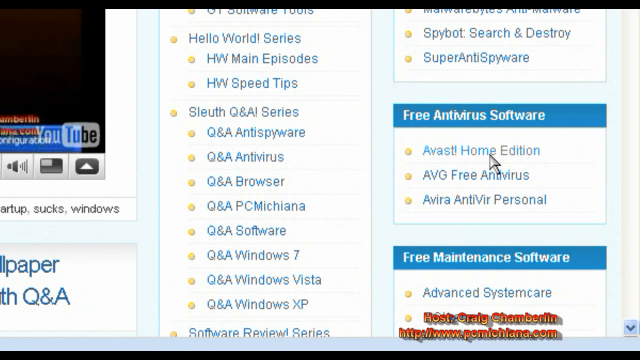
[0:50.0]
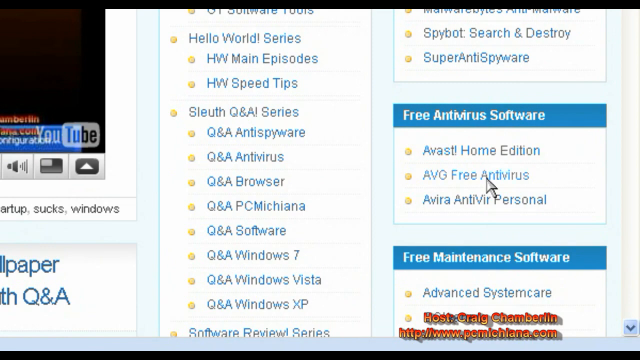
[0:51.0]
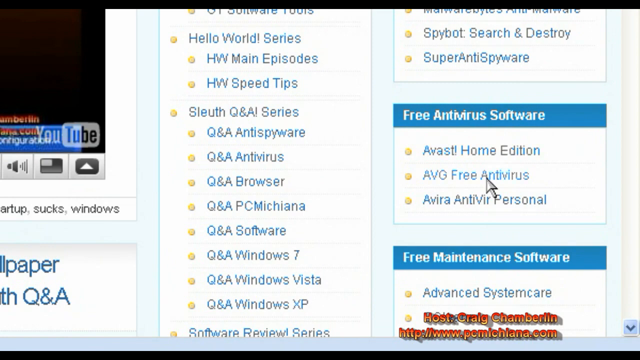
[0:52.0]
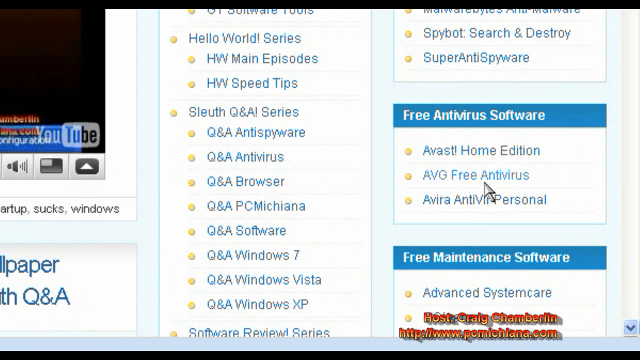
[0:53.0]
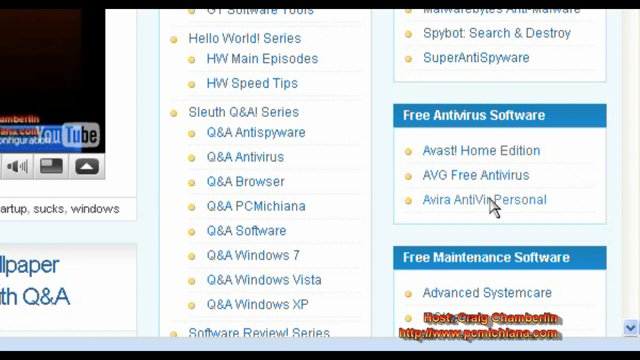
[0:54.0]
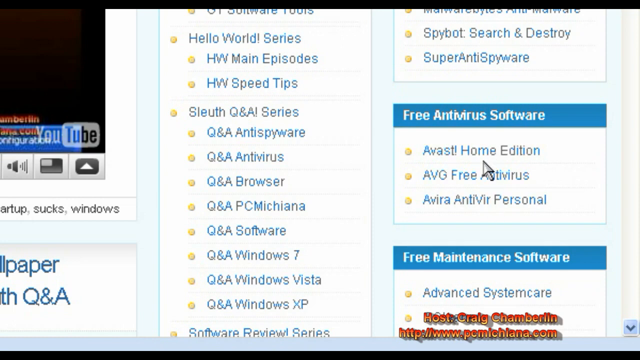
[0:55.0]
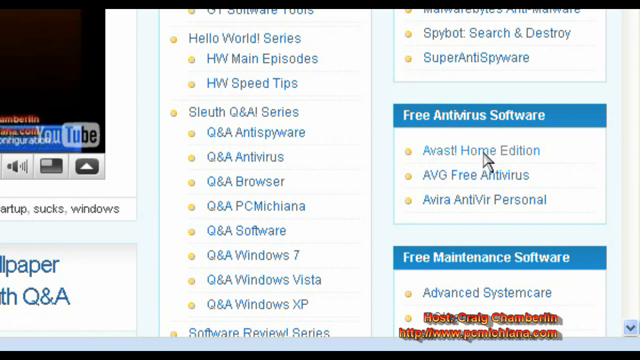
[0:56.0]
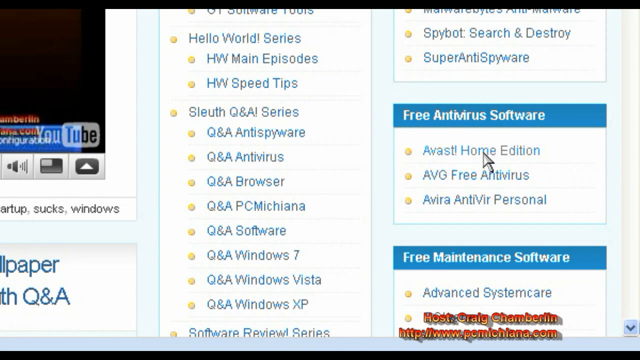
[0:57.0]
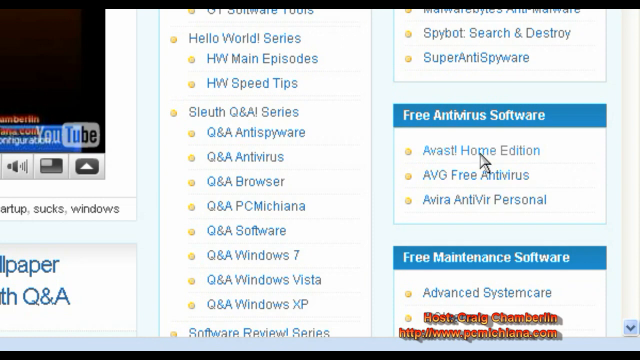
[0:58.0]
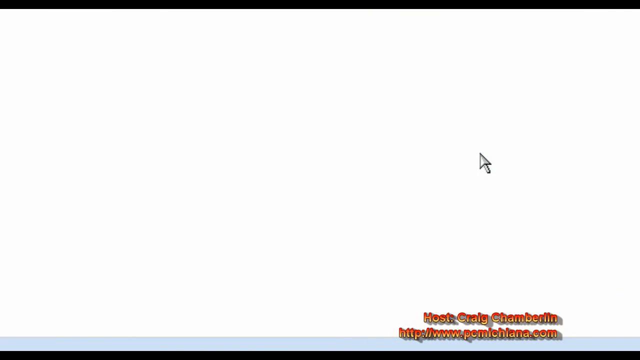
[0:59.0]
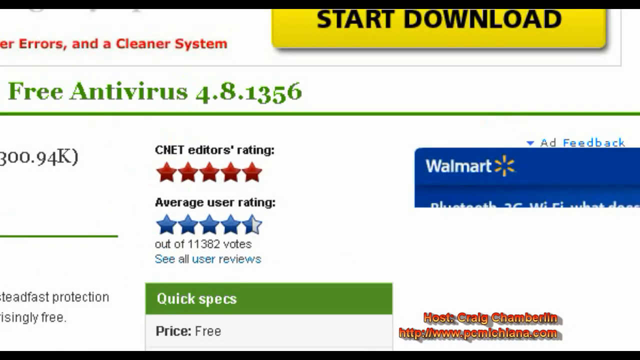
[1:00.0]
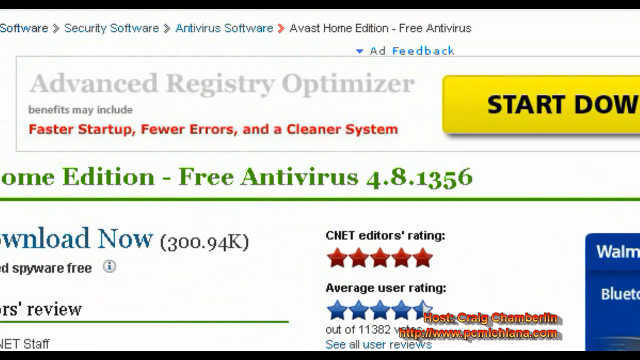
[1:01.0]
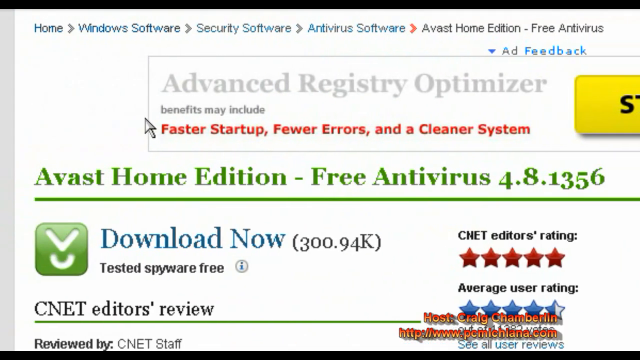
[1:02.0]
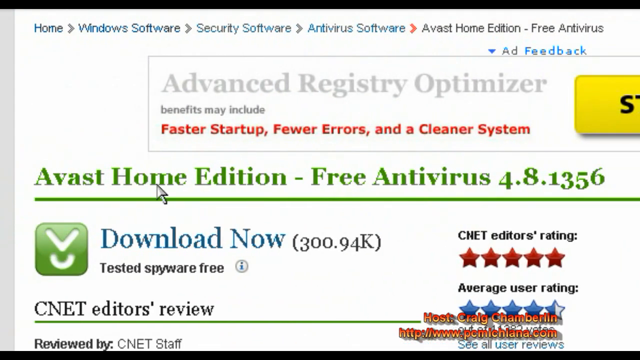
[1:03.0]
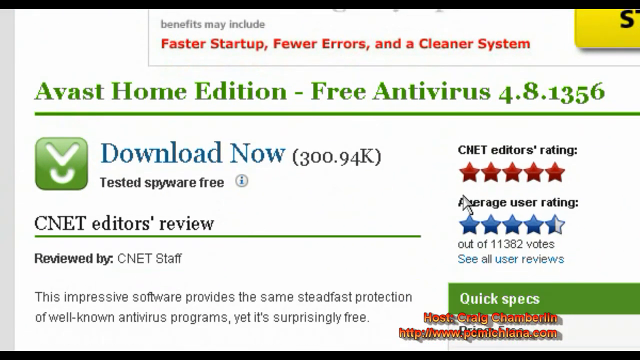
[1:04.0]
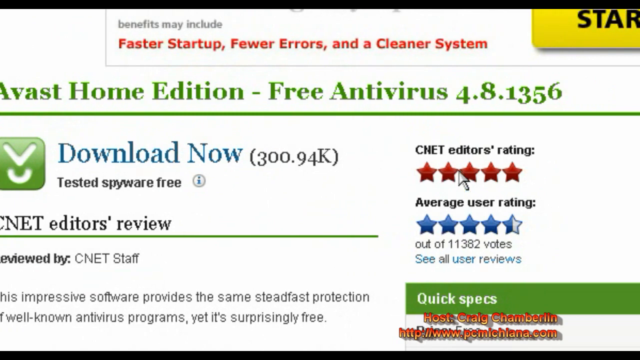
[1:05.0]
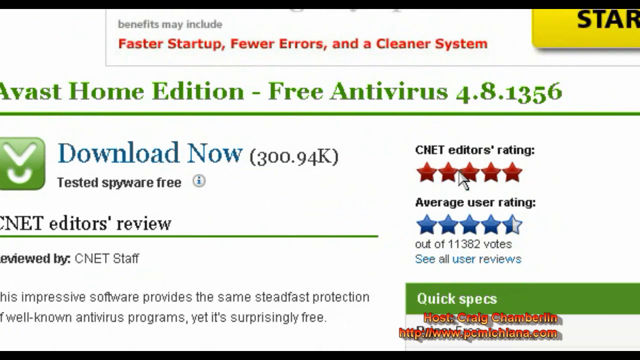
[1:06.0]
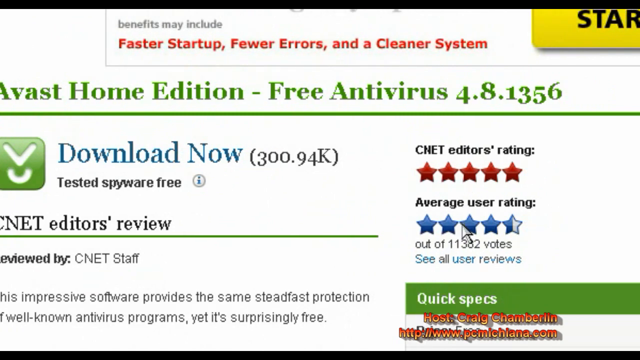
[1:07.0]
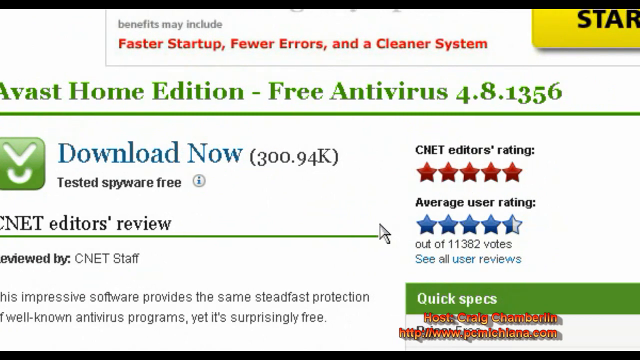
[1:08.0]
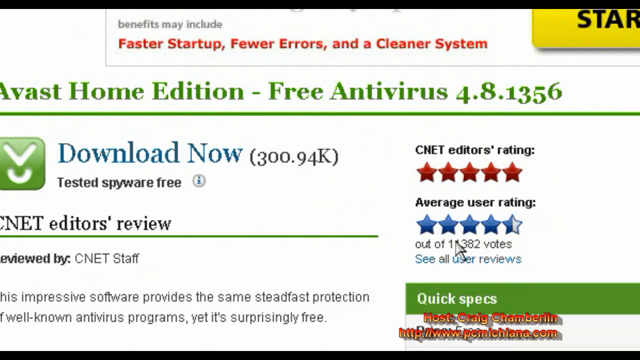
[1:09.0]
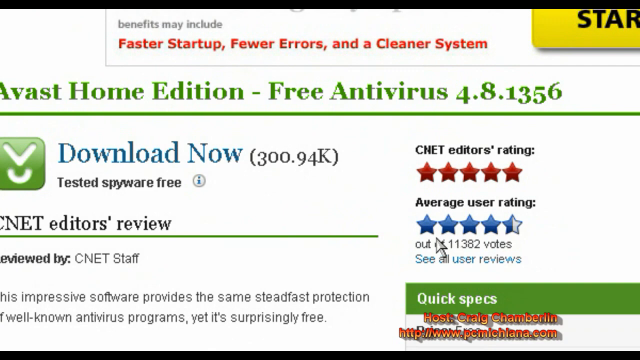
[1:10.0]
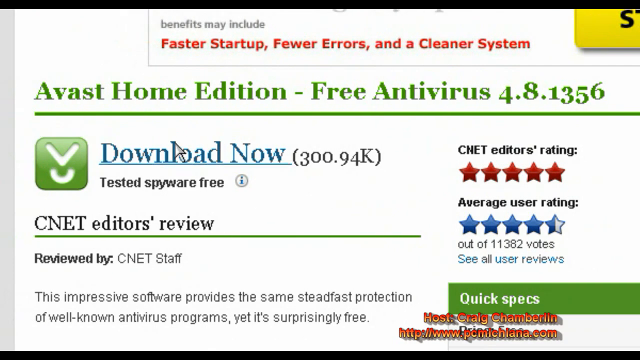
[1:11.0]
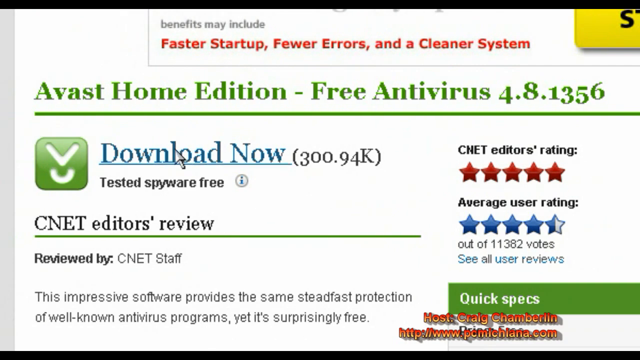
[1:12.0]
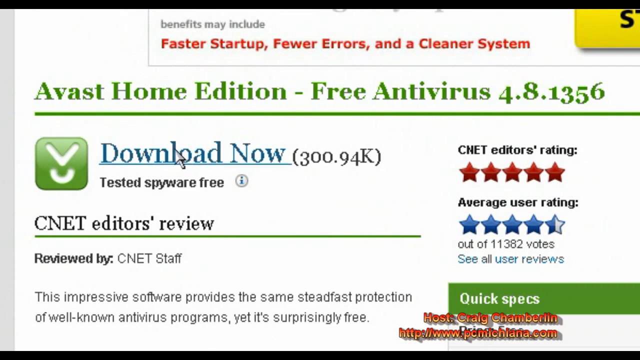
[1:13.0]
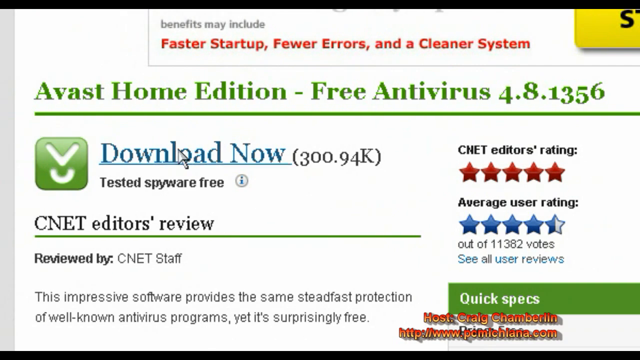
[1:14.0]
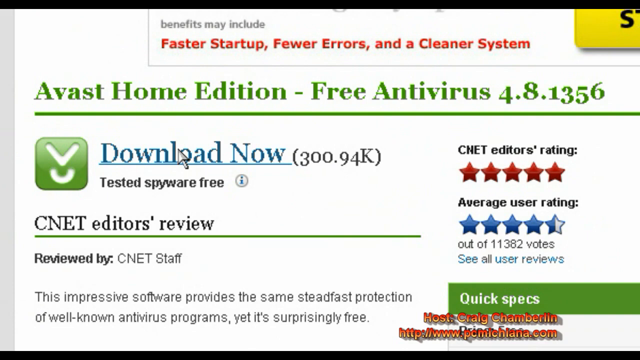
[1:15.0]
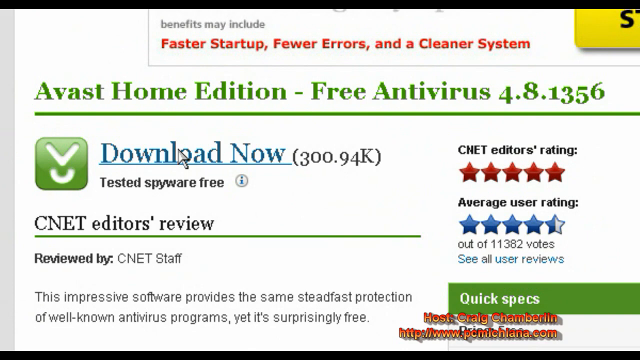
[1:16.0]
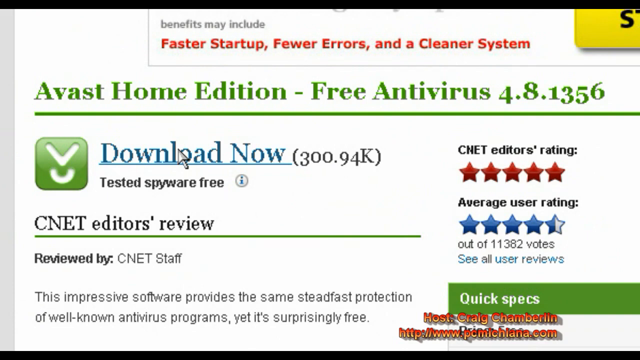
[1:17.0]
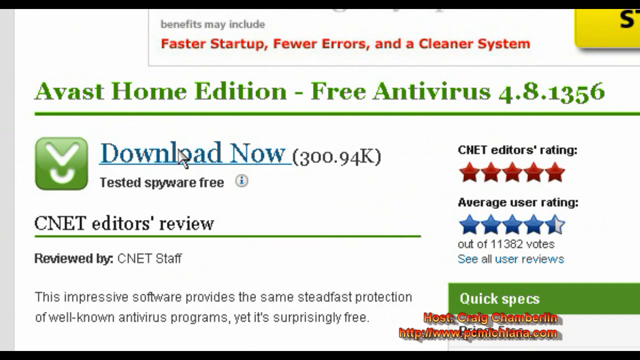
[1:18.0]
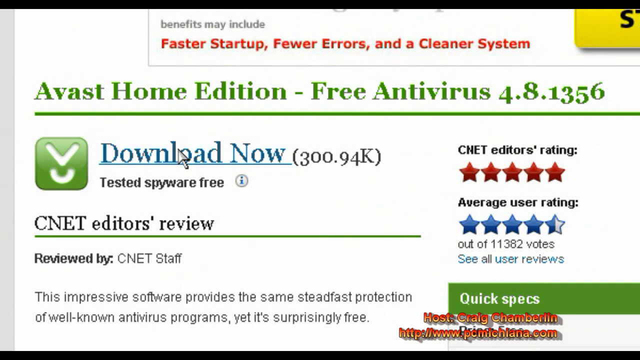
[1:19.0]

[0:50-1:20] The cursor scrolls down the options, highlighting them, and clicks on Avast Home Edition, which opens another web page. The view moves across the page, which shows the number of downloads, over 300,000, and ratings: a CNET editor's rating of five stars and an average user rating of about four and a half stars from 11,382 votes. There is an option to view other user reviews, and the cursor hovers around that area, then moves to the download now option and hovers over it as a line draws underneath. This page's colour scheme differs from the previous page; it is no longer mainly blue but a mix, with a lot of green writing where it says Avast Home Edition, plus a little blue, red and black. There is an ad at the top for a faster start and a cleaner system, with a start button. The page also gives a CNET editor's review and some information below the download option. It is a basic page with little colour or content, mostly writing.